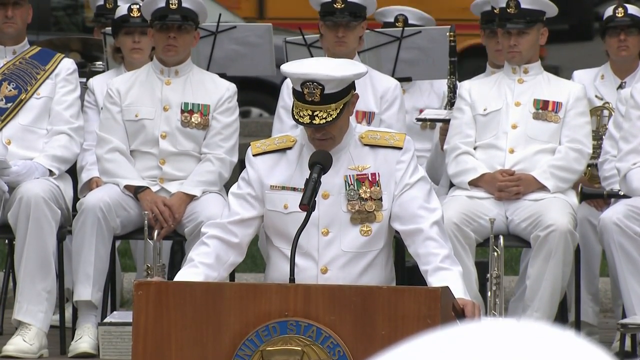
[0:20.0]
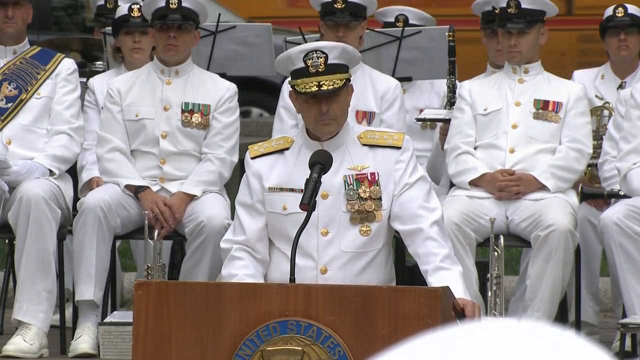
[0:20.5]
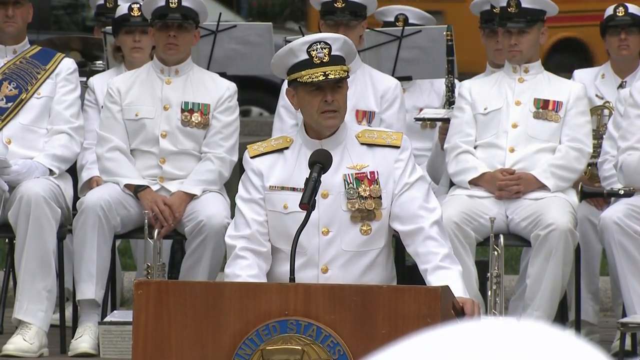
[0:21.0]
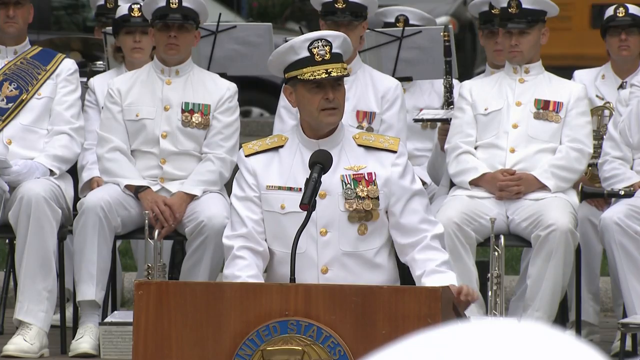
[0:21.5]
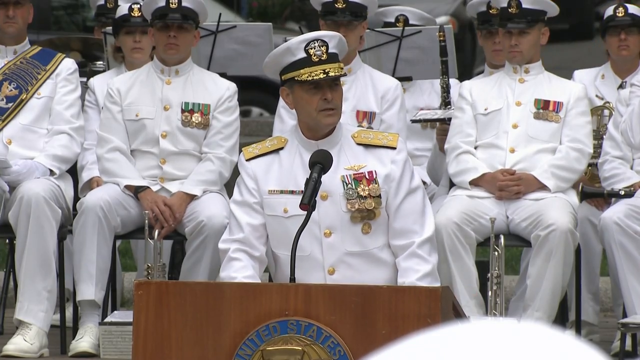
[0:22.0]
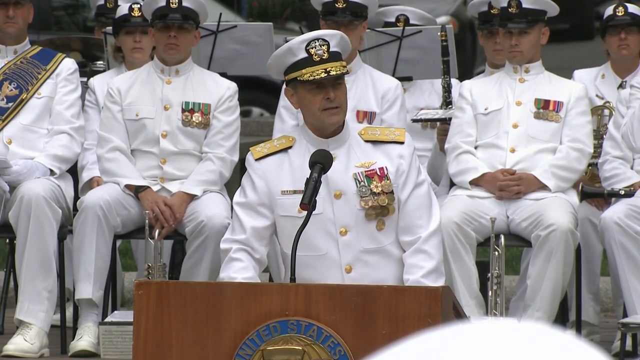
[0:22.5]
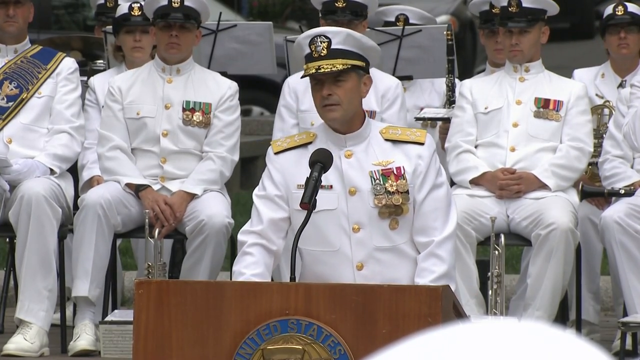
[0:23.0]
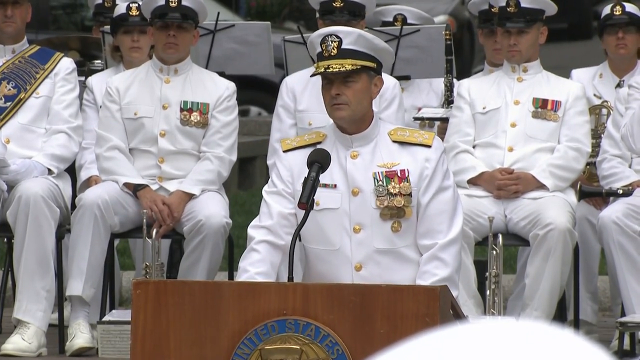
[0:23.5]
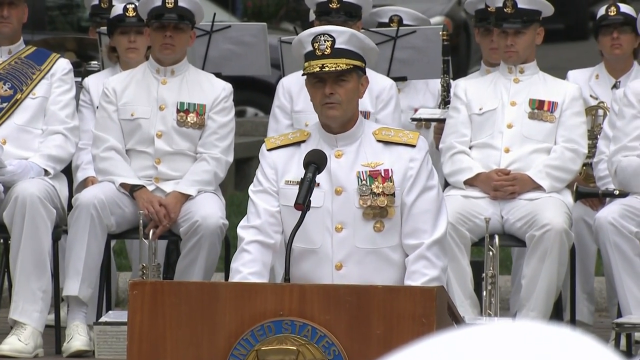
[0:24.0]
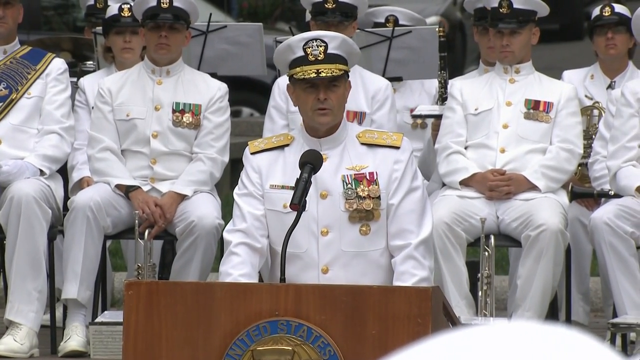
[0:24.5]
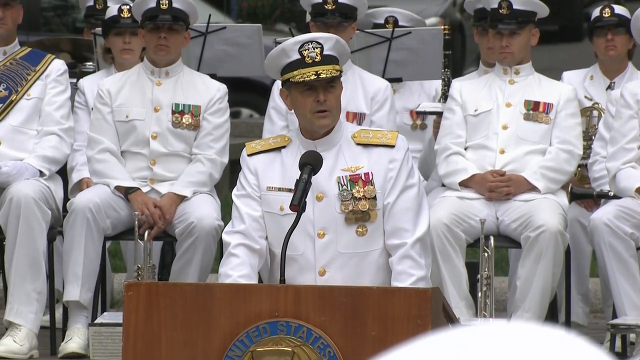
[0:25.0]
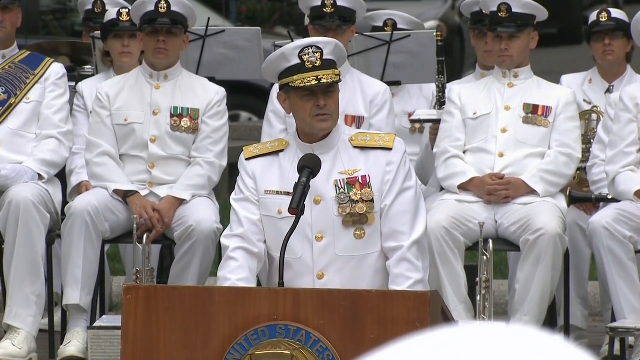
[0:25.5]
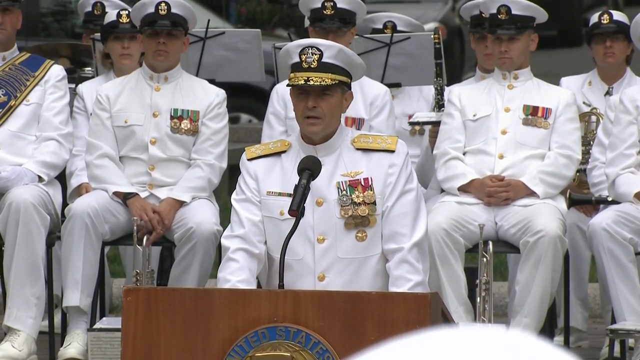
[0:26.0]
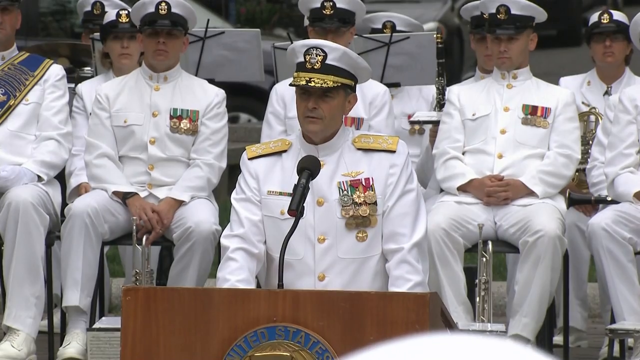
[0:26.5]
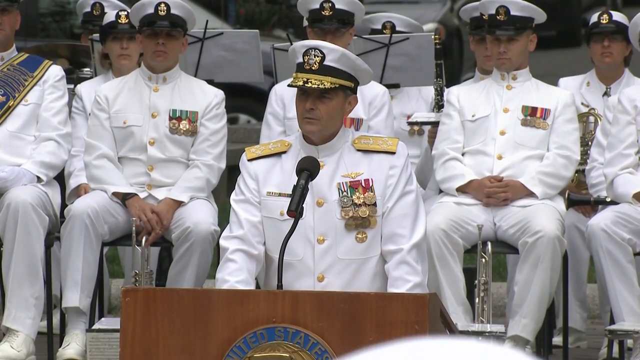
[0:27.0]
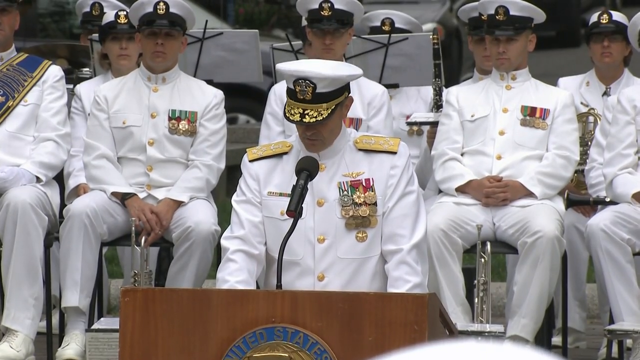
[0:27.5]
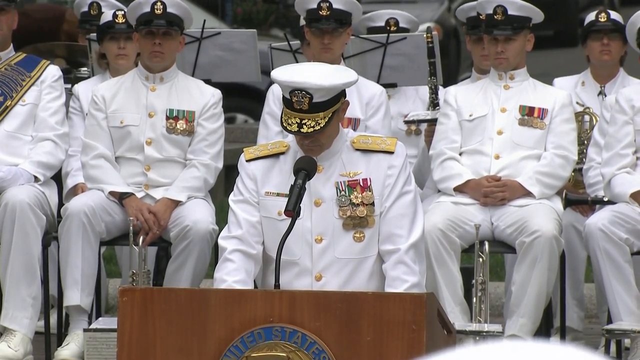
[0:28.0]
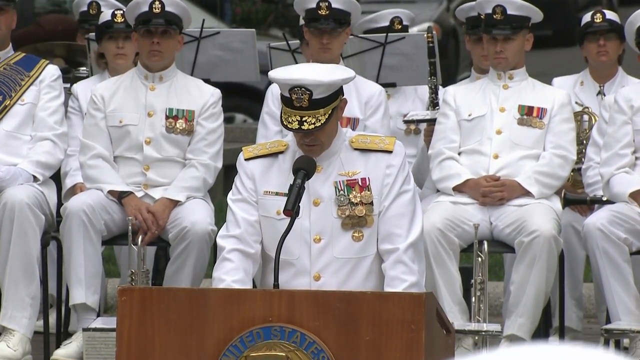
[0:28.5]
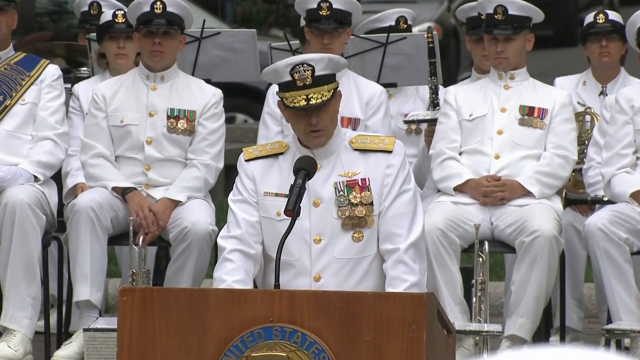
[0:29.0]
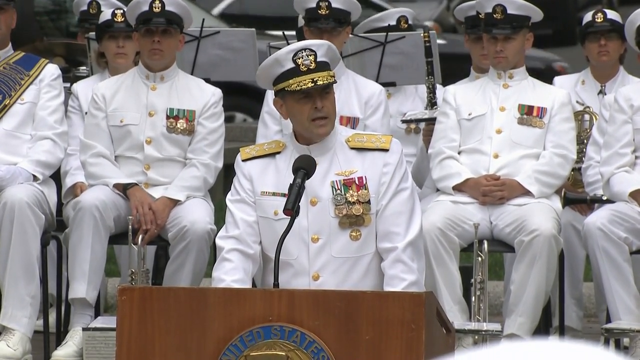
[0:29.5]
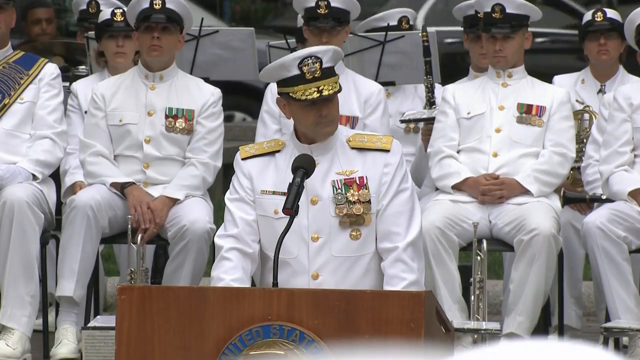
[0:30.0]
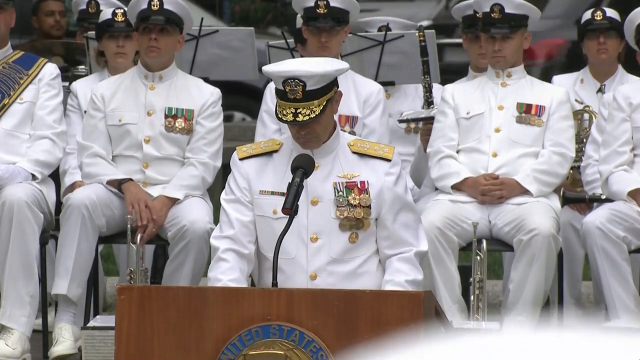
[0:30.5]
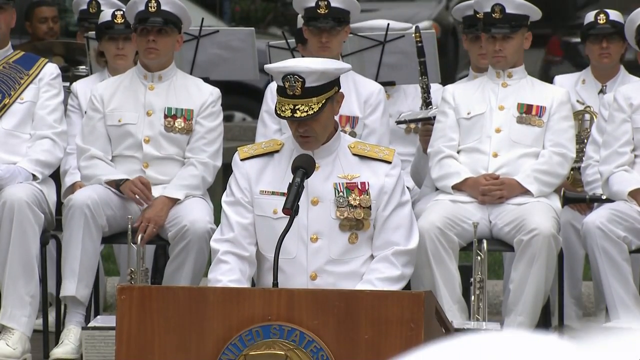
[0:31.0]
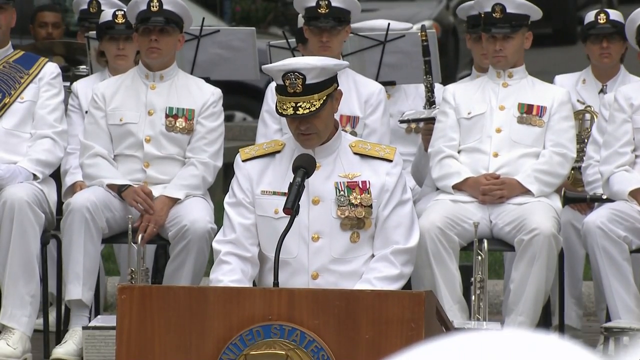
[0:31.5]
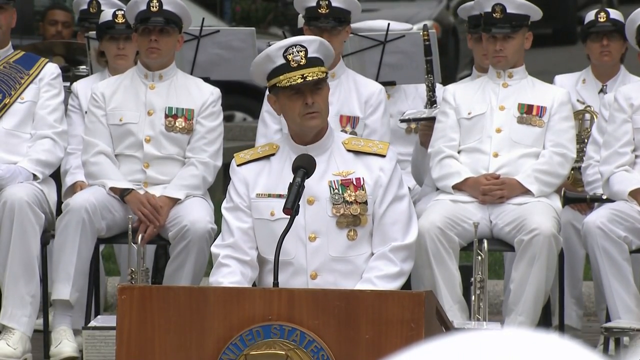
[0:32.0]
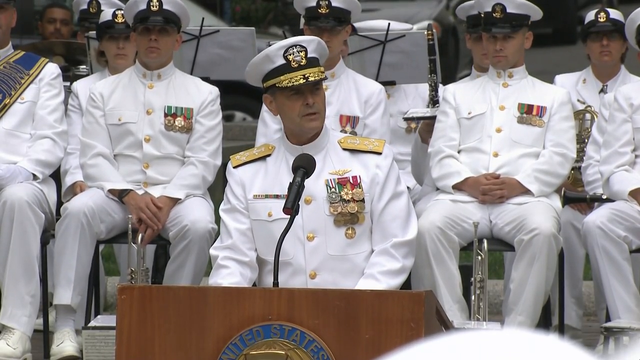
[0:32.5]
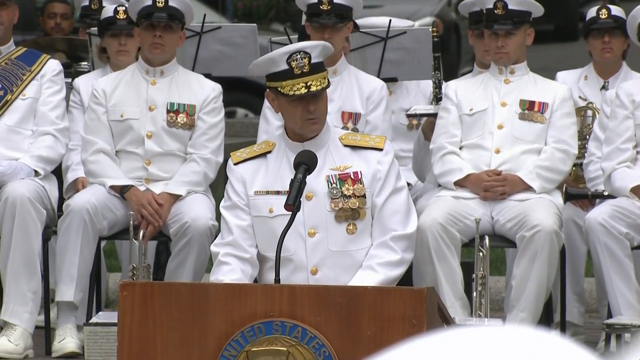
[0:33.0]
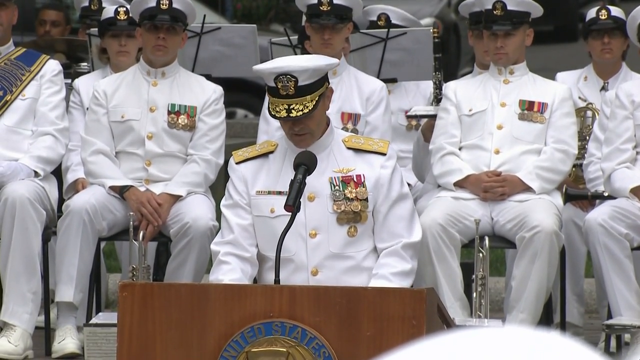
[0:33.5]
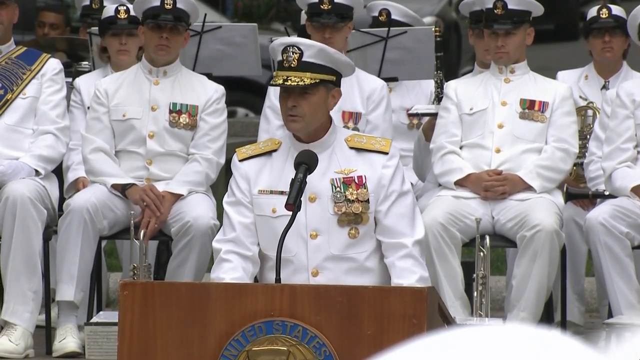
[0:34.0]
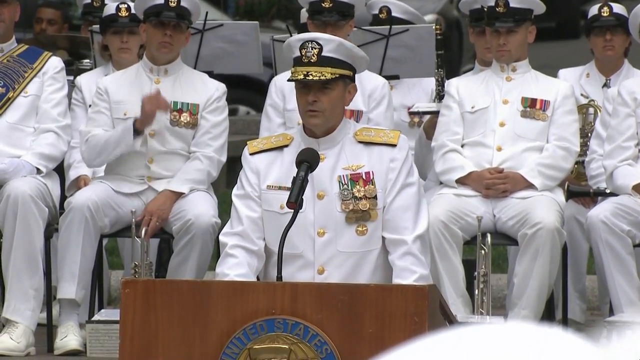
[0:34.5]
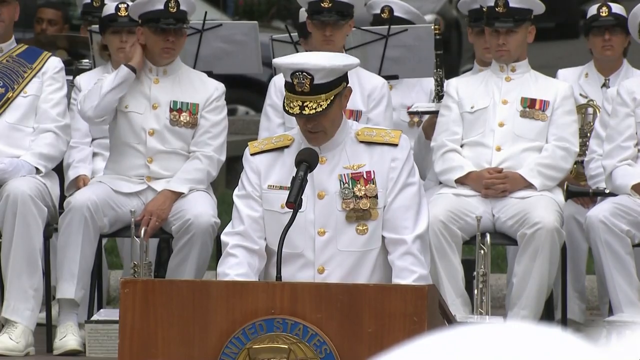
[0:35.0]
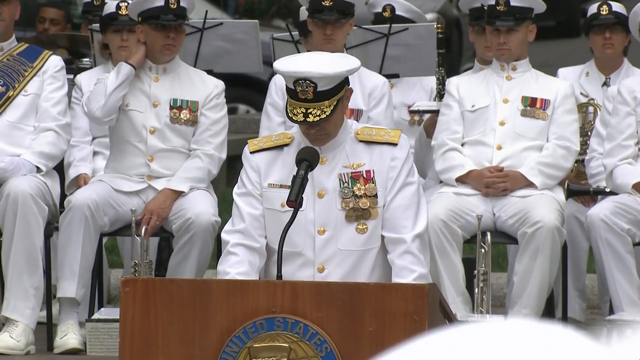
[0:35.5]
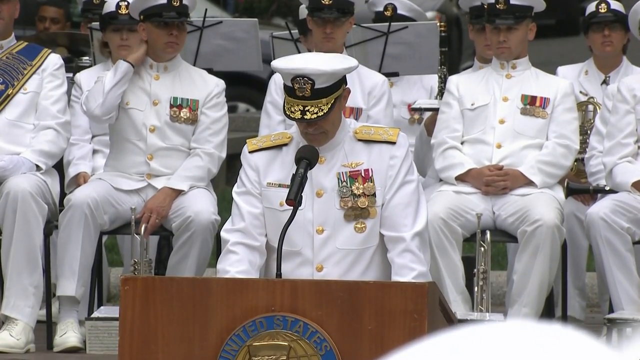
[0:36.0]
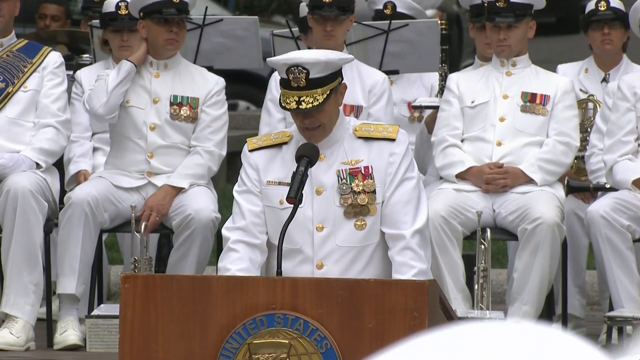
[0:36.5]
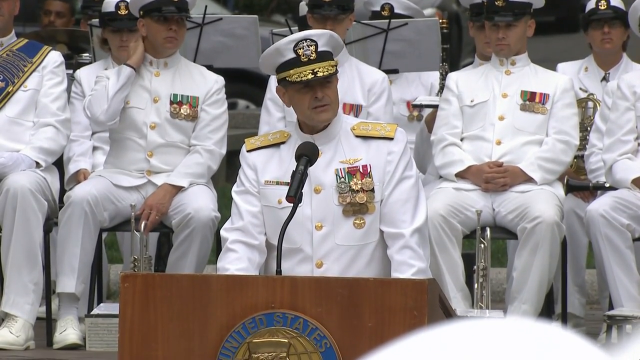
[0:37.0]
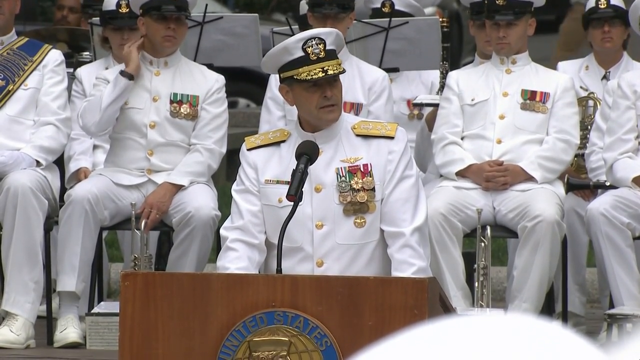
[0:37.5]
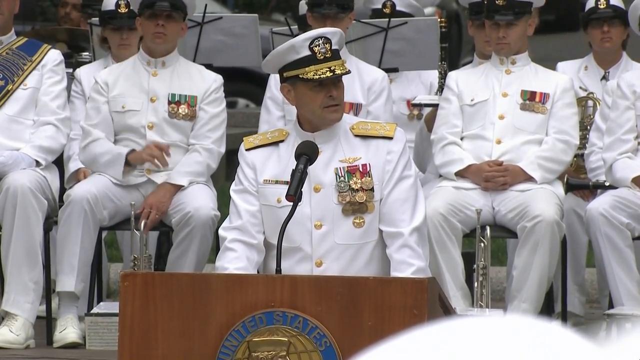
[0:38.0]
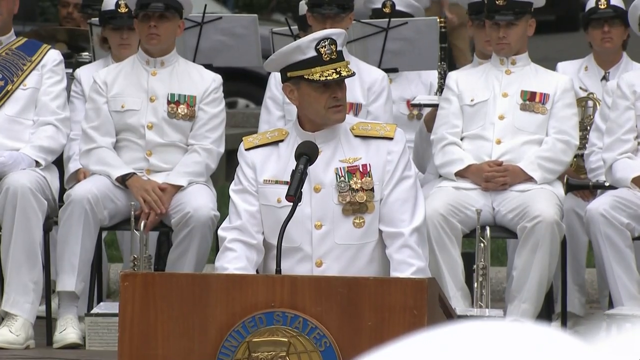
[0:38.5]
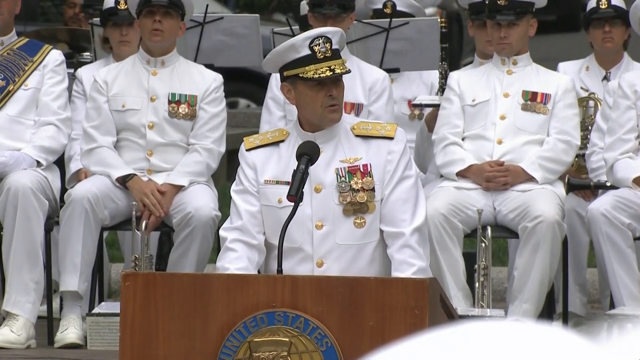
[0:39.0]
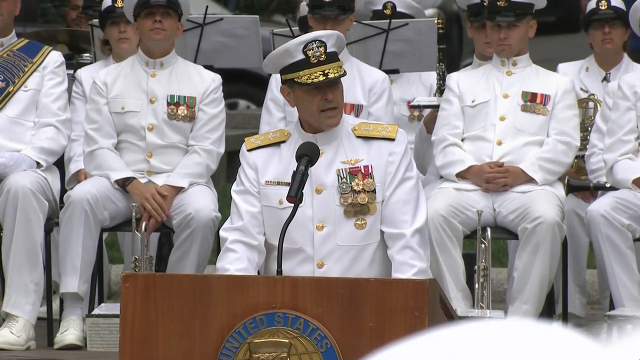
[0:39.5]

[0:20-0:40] The speaking at the podium continues, with people dressed in white uniforms. Various people have their hands on their knees, on a chair, or clasped with their other hand. They seem to be showing respect but look quite sad. The person at the podium has many medals and gold attachments at the top, and gold on his hat, which the other people shown do not have. Musical instruments are visible, maybe a trumpet of some kind, possibly part of the ceremony. There are also books that probably contain music and songs.